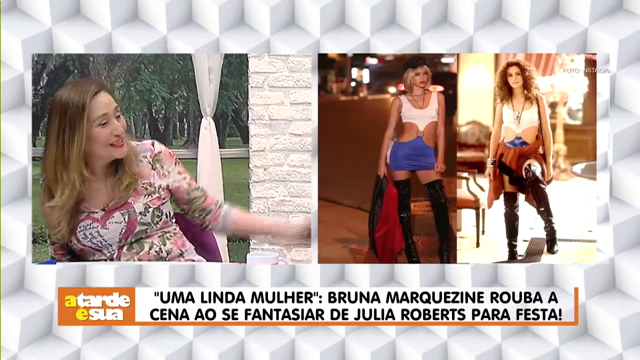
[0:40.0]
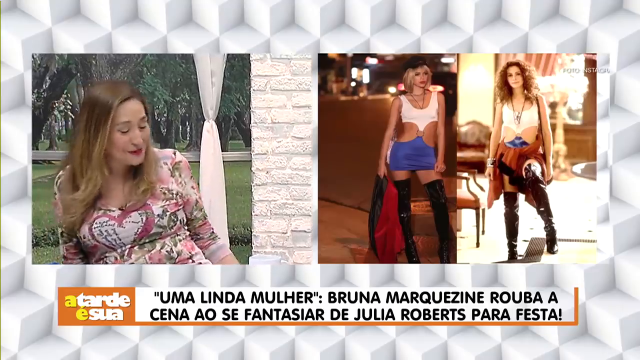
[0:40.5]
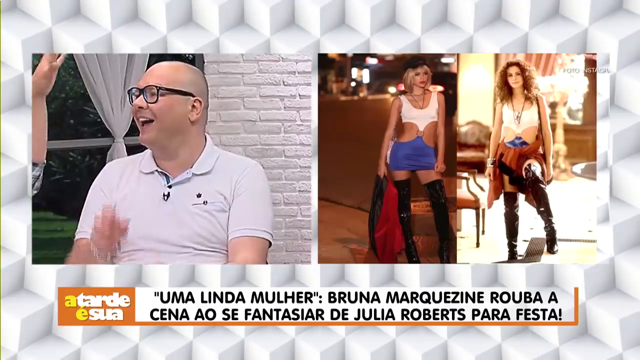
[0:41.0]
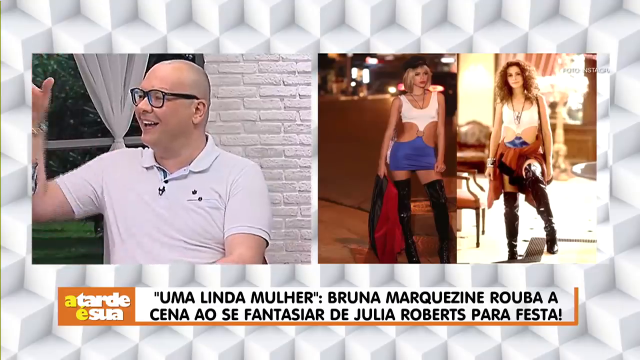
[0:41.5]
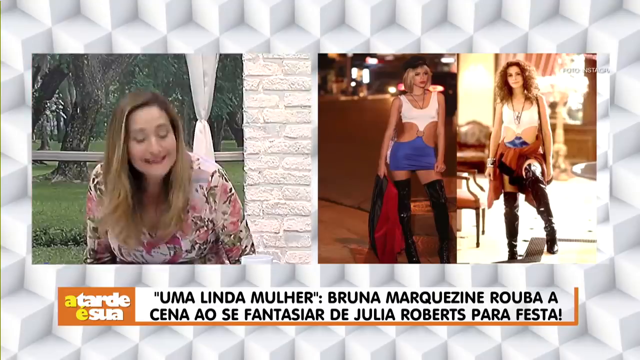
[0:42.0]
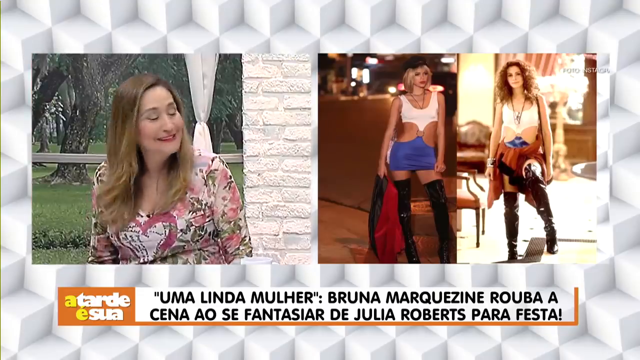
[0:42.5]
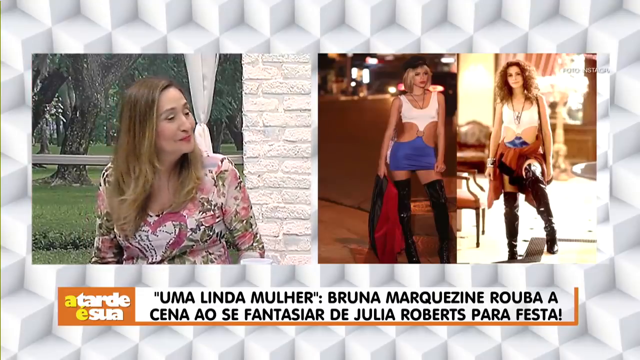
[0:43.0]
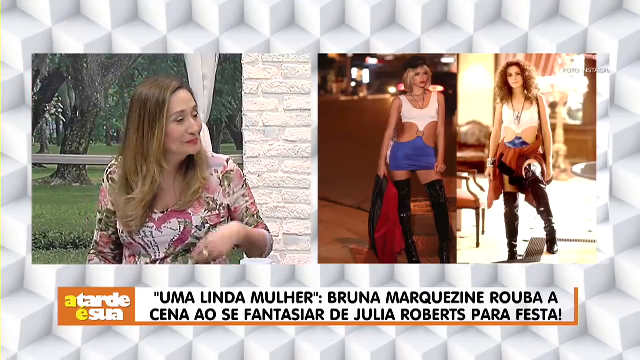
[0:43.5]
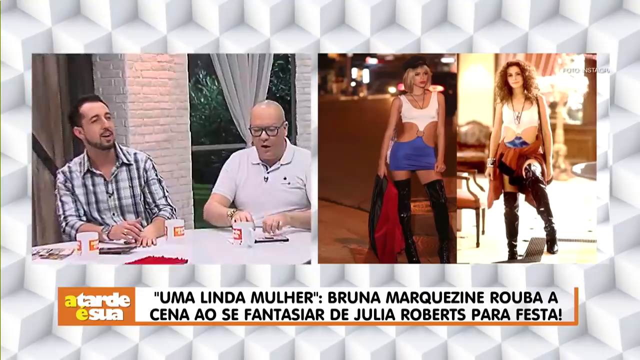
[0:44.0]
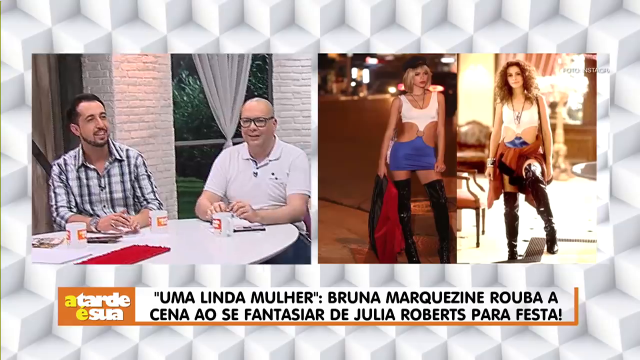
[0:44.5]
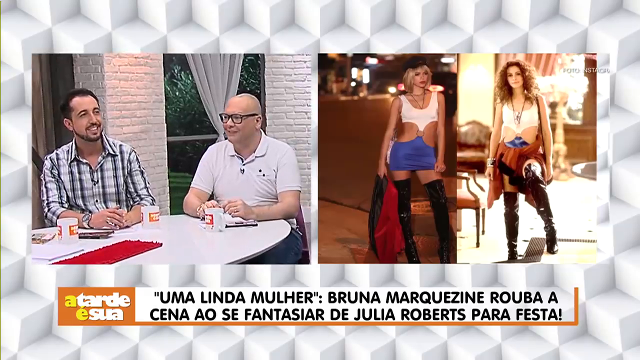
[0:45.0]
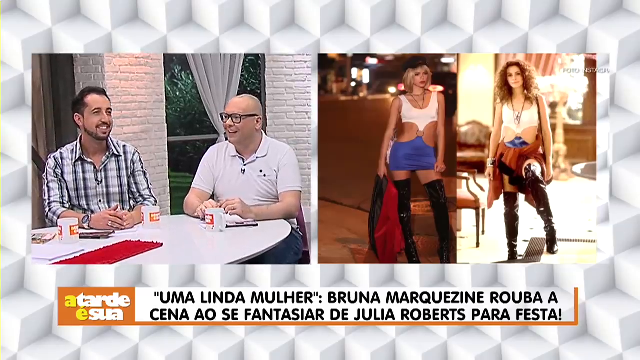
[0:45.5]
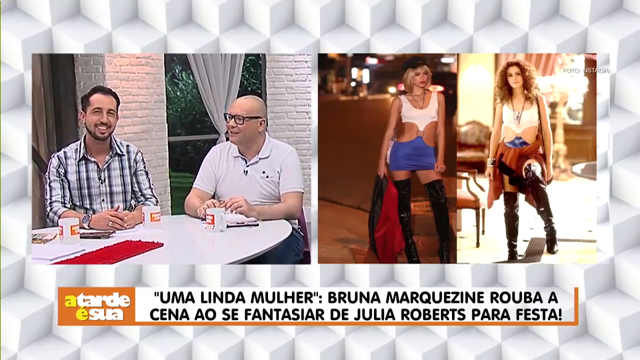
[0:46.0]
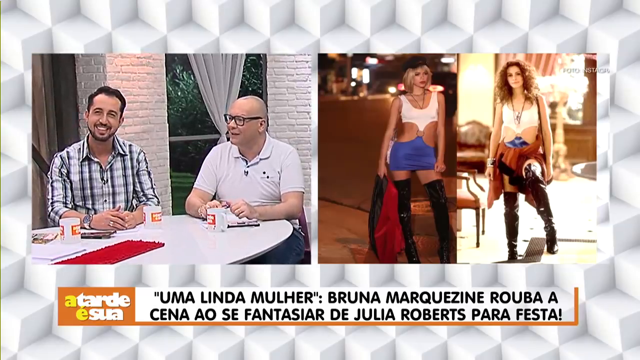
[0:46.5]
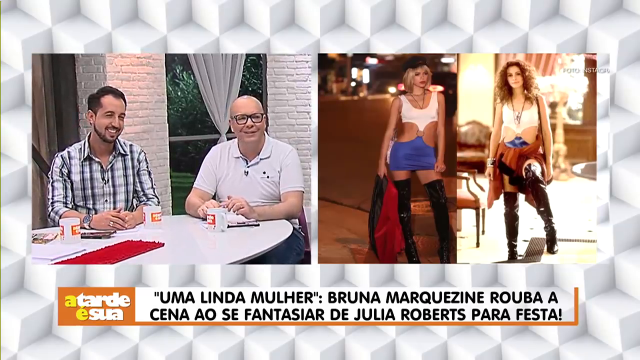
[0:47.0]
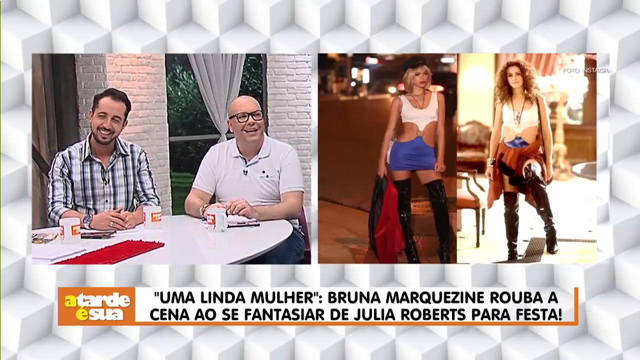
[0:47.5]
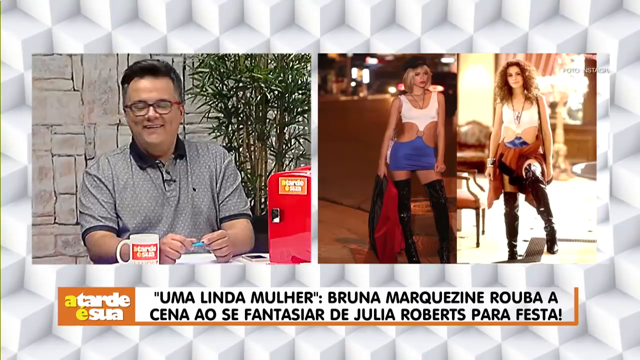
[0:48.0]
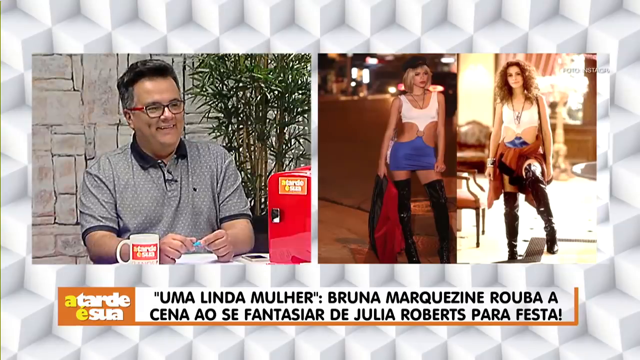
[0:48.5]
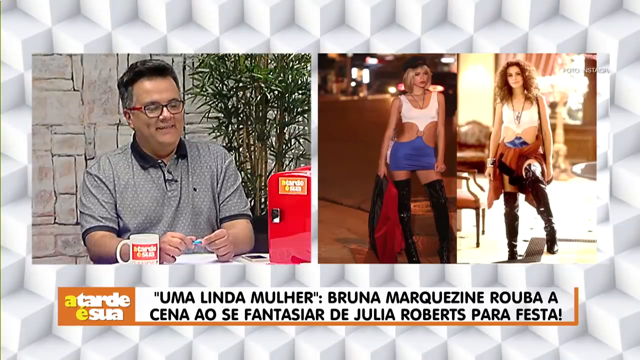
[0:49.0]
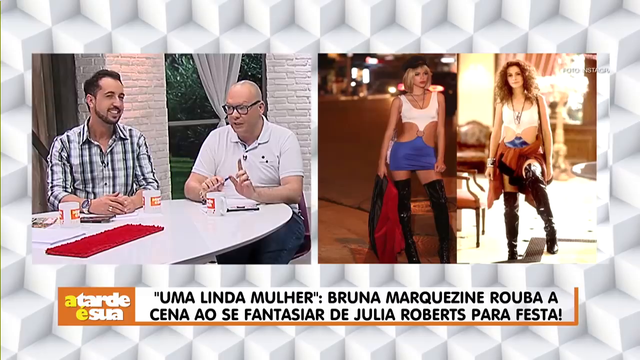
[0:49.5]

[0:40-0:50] The comparison shot of Julia Roberts and the other woman, possibly Linda Mueller, is on screen. The woman in the floral outfit laughs a little and points. The bald man with glasses reaches out as if to touch her hand. The woman in the floral print dress looks apparently at the bald man and talks. The bald man and the man in the striped shirt talk, smile and shake their heads. The man in the gray shirt with black accents is now smiling. The shot returns to the bald man and the man in the striped shirt, then to the woman in the floral print, with more talking and slapping of hands as they are jovial with each other. All the while, the image of the woman dressed like Julia Roberts is next to her. The woman dressed as Julia Roberts has short, shoulder-length blonde hair, while Julia Roberts has very thick, curly, full brown hair.